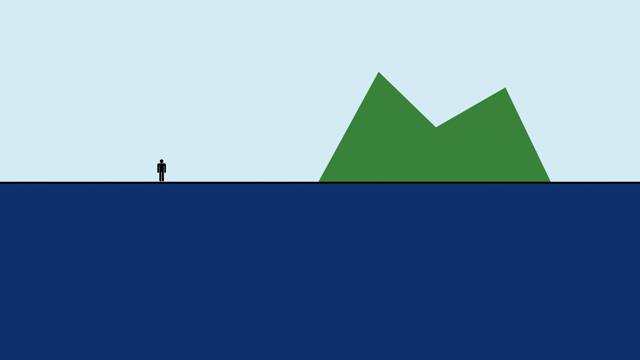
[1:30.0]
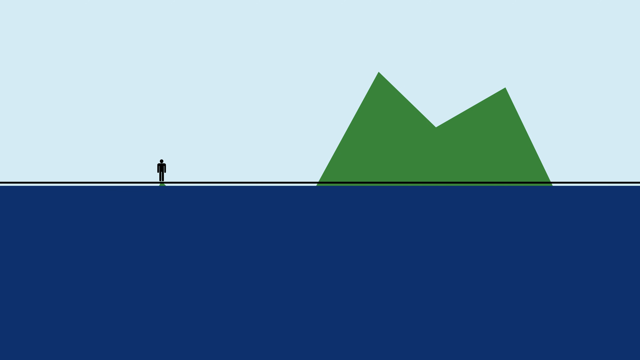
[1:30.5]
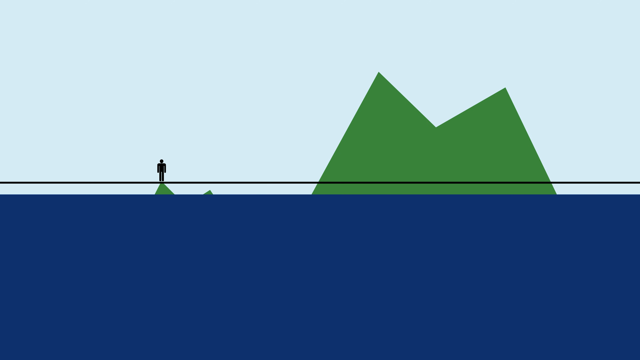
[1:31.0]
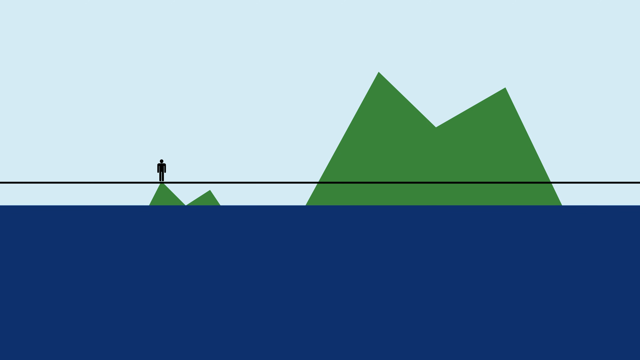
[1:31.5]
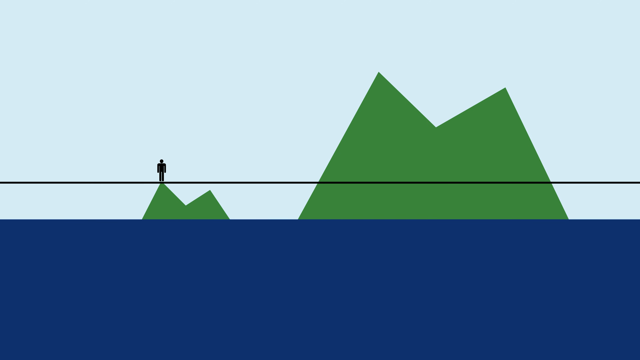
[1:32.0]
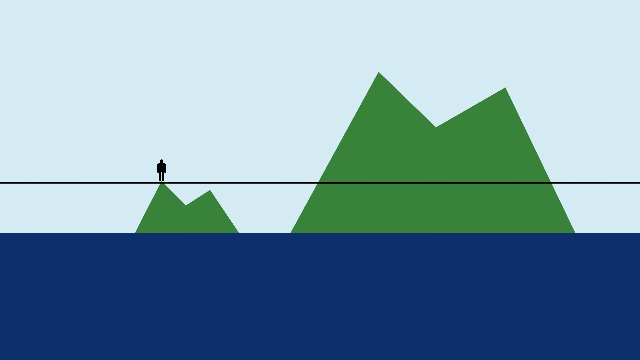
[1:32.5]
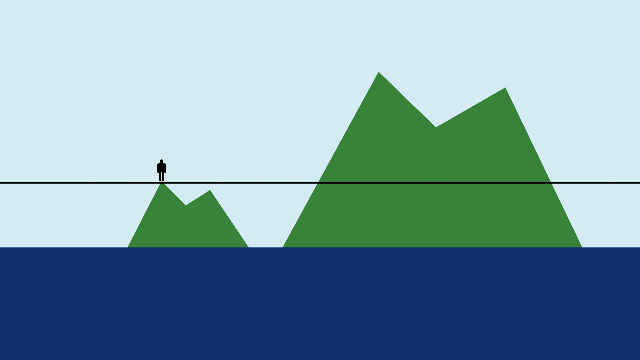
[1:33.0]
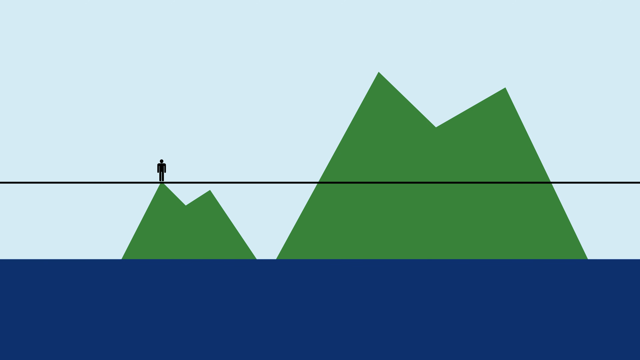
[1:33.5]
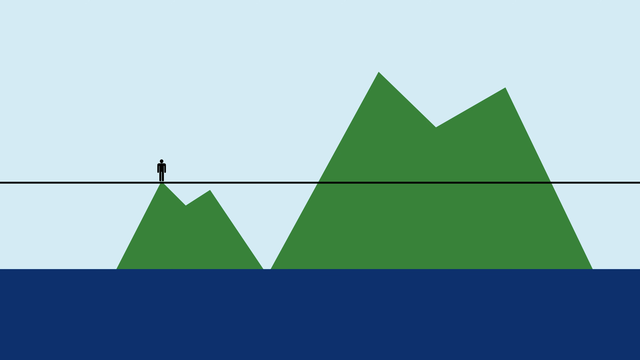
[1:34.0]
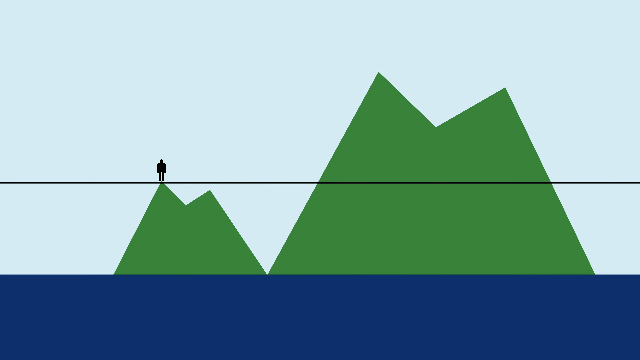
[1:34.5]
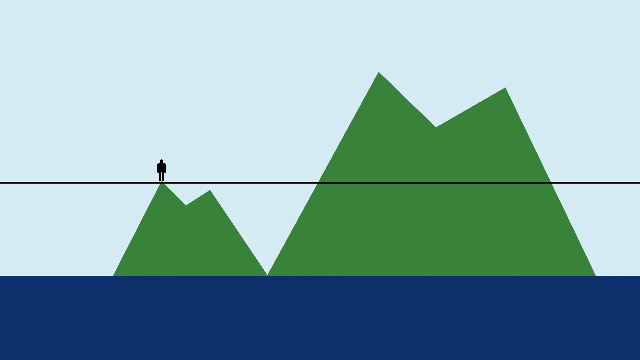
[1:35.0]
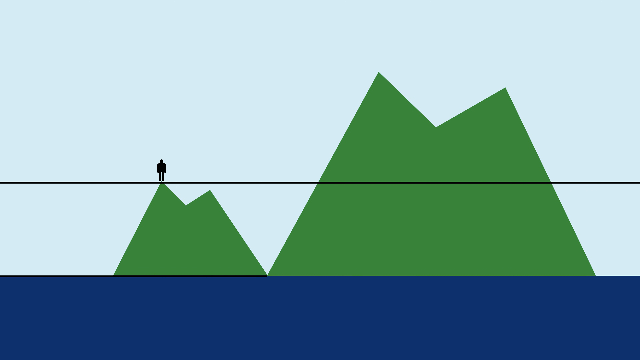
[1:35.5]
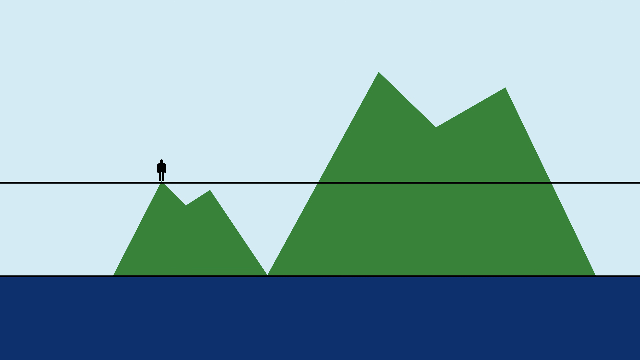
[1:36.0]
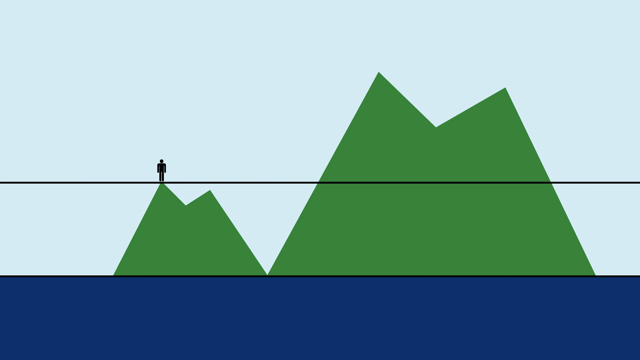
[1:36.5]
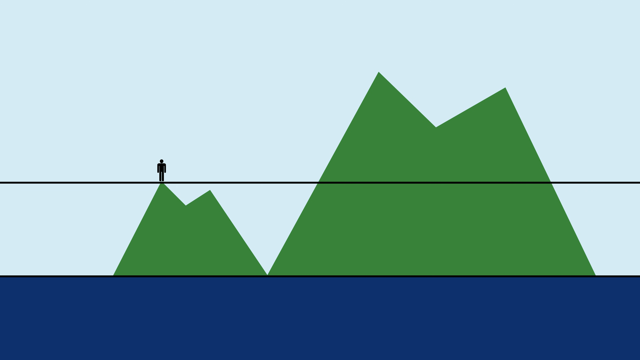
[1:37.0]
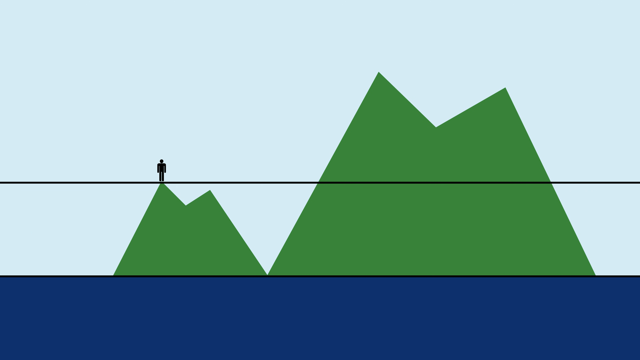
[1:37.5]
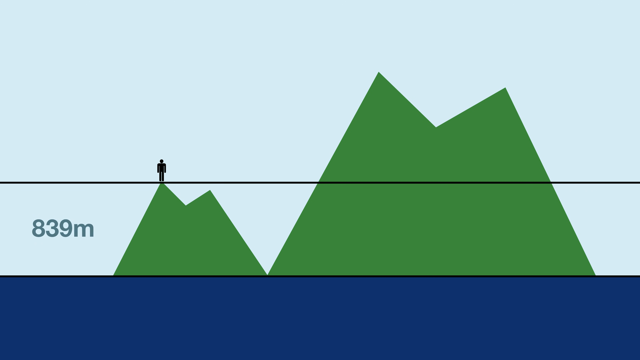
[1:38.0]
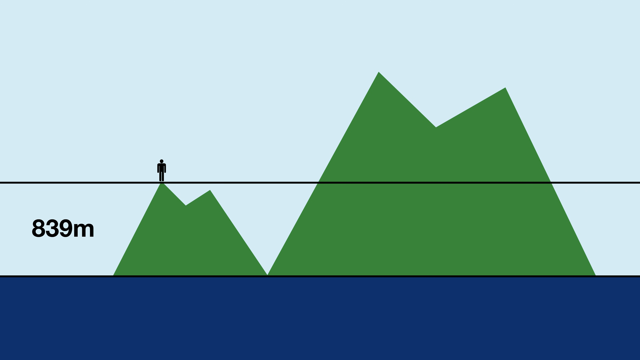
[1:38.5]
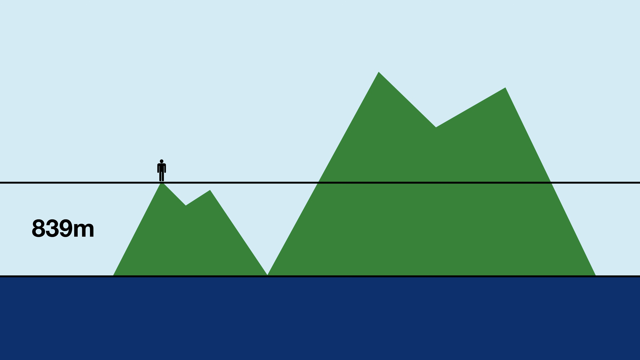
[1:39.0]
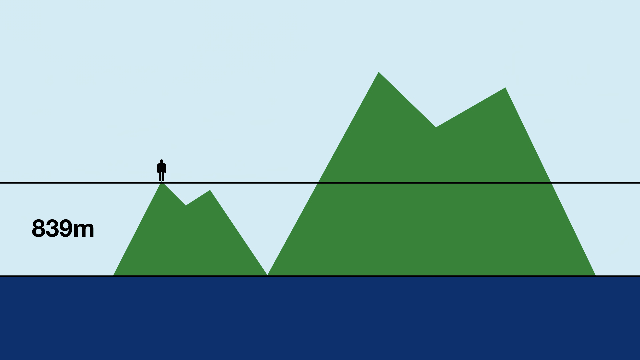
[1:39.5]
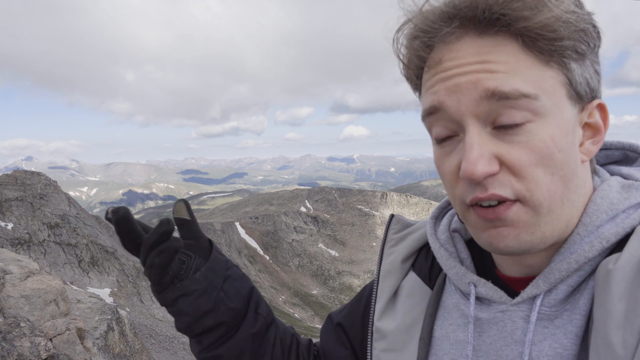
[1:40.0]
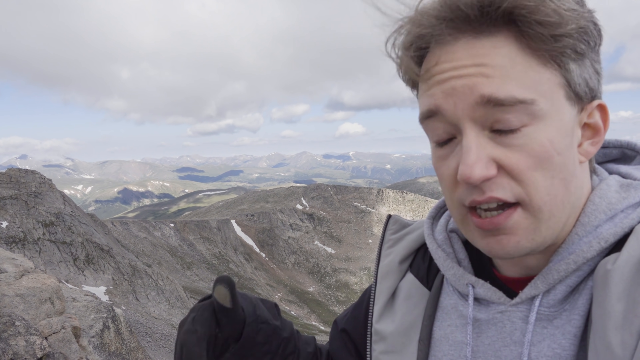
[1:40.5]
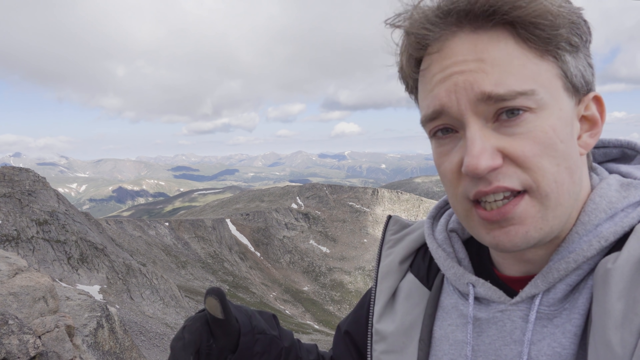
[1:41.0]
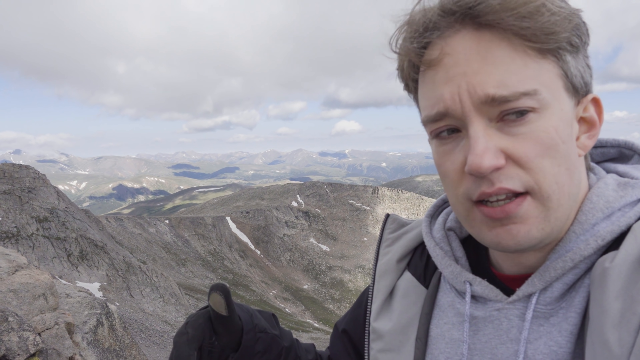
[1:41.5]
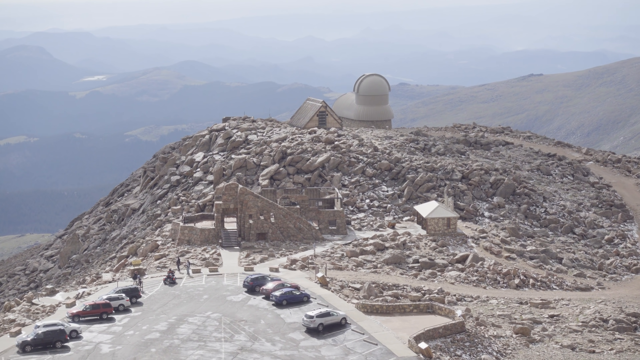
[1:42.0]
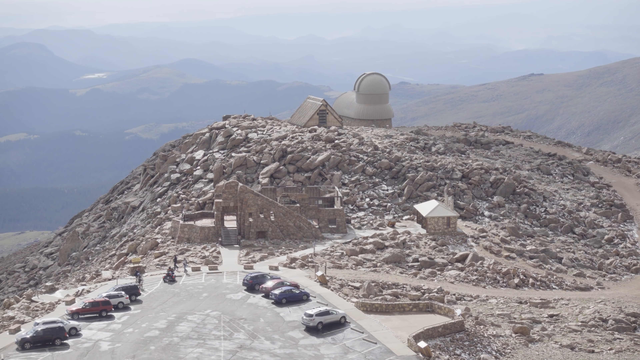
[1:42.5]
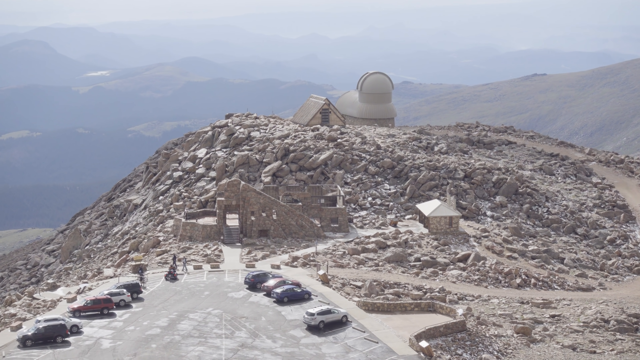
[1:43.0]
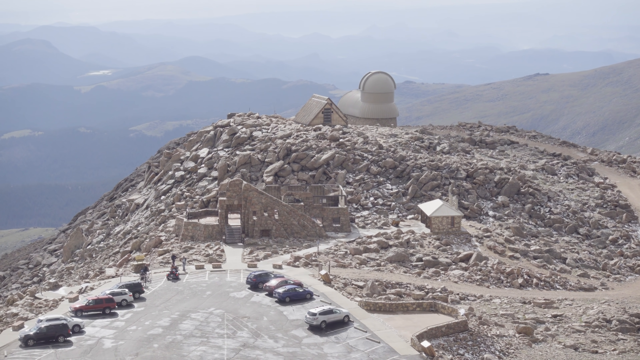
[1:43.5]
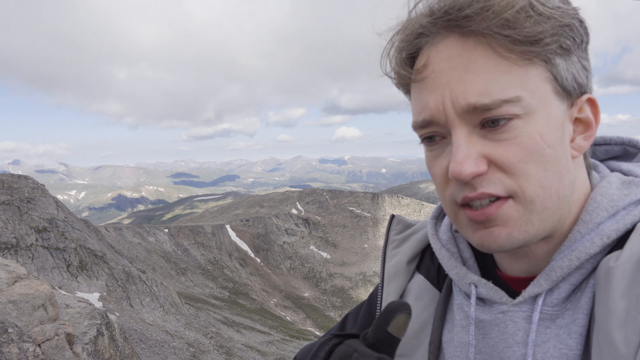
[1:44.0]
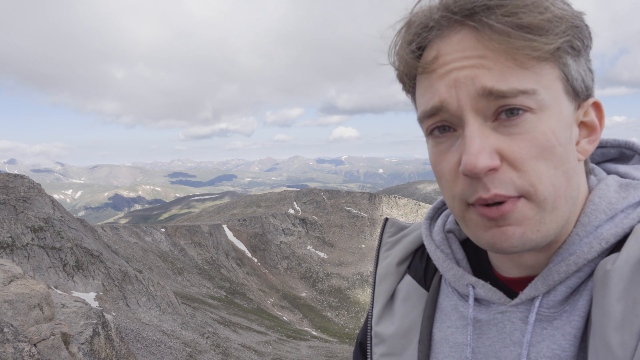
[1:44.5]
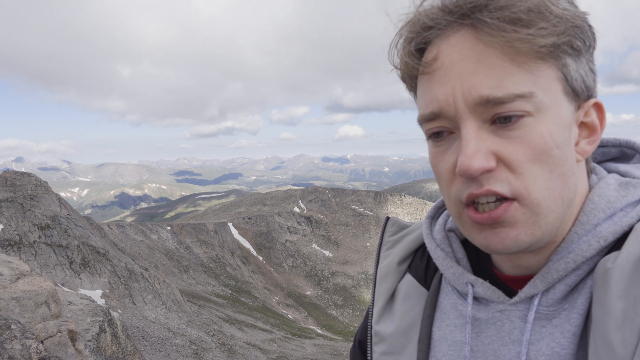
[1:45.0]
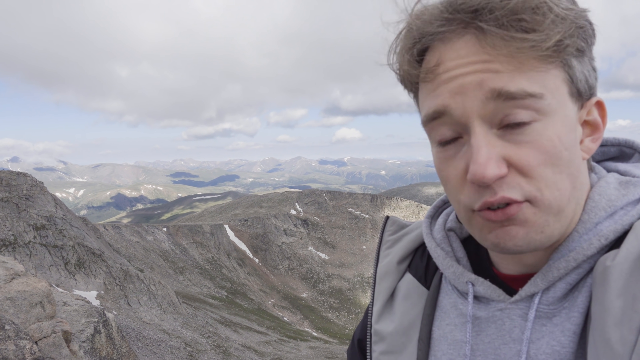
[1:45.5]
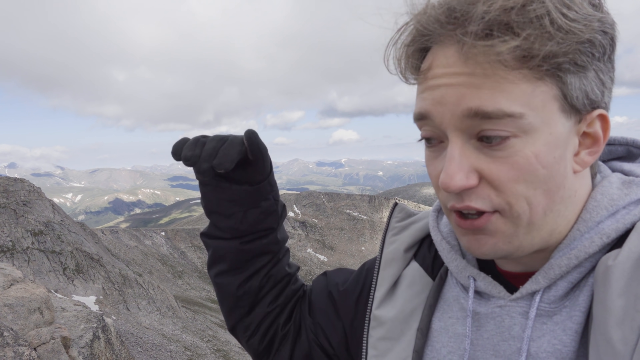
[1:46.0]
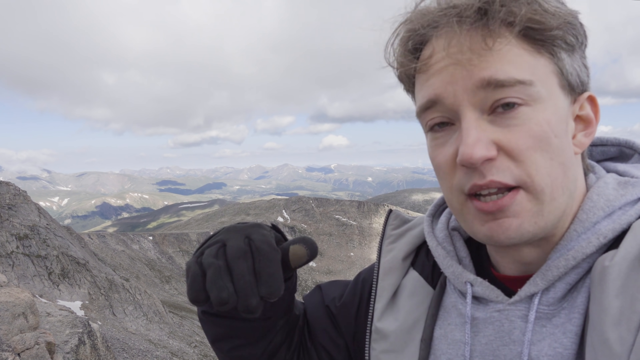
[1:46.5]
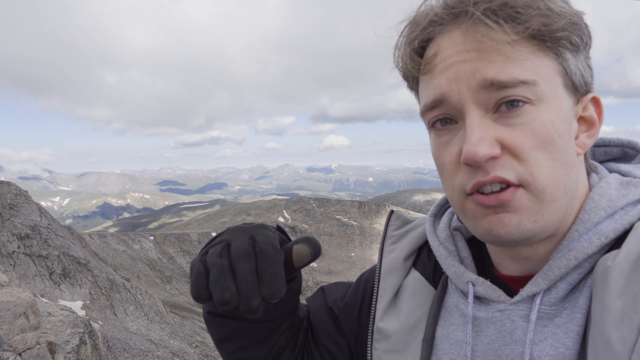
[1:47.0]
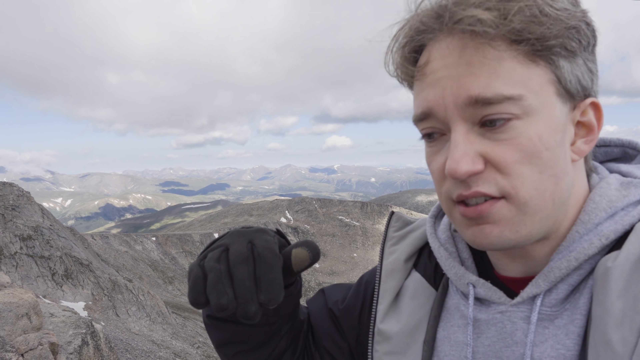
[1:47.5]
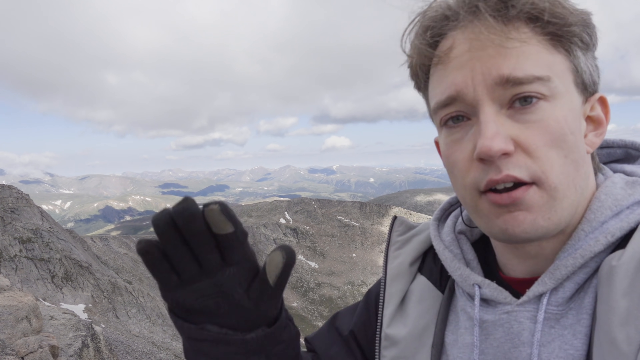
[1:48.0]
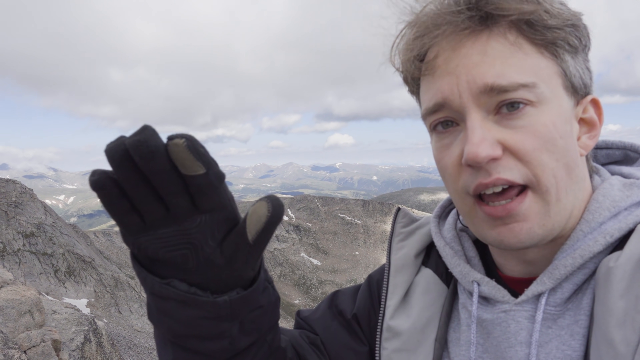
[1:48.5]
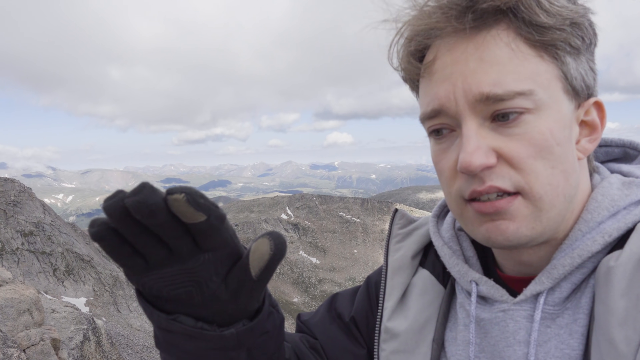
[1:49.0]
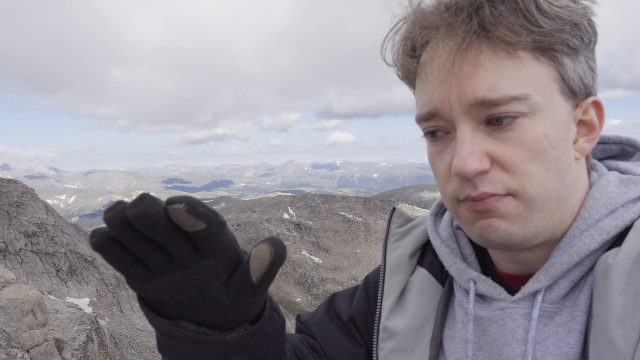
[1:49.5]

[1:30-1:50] The graph from earlier shows a green mountain, with a man represented by a black character near its bottom and a black line marking the midpoint of the top of the mountain. Below the black line is "839 meters". A blue portion blocks the bottom of the mountain and slowly drifts away, revealing the bottom of the mountain. The shot cuts to the man speaking to the camera, then to the parking lot with 9 or so parked cars, individuals who appear to be tourists walking around, and buildings.